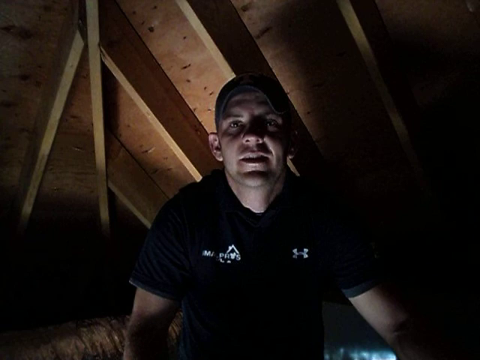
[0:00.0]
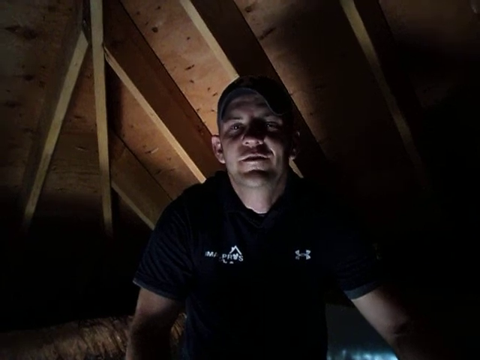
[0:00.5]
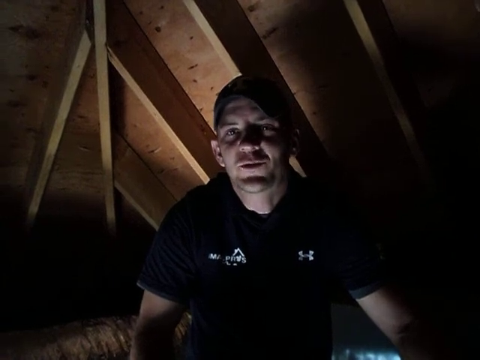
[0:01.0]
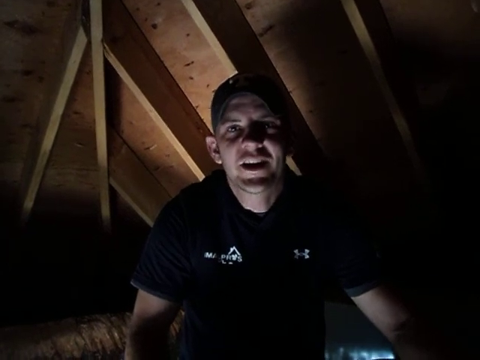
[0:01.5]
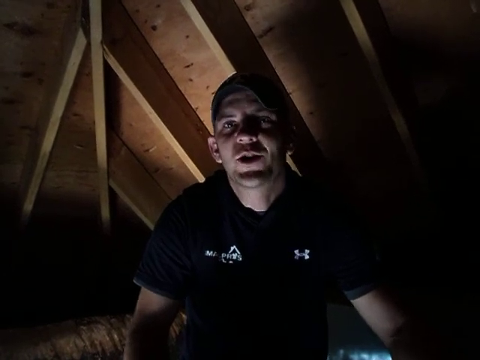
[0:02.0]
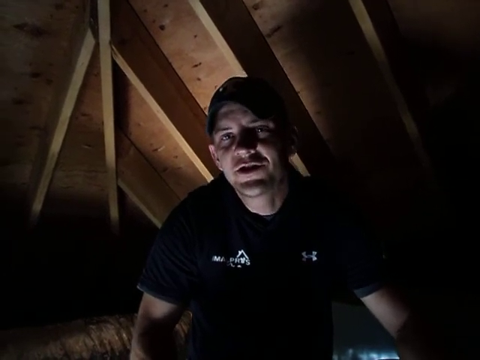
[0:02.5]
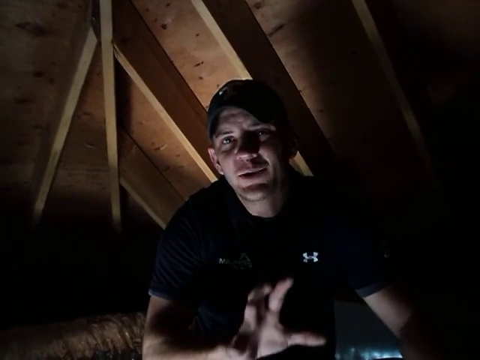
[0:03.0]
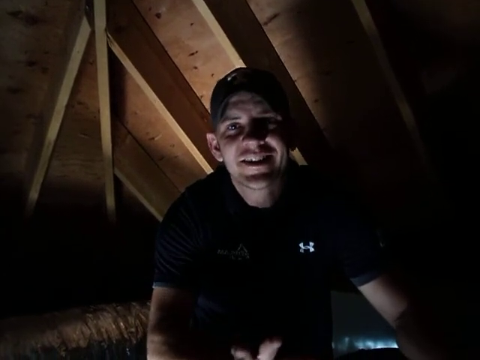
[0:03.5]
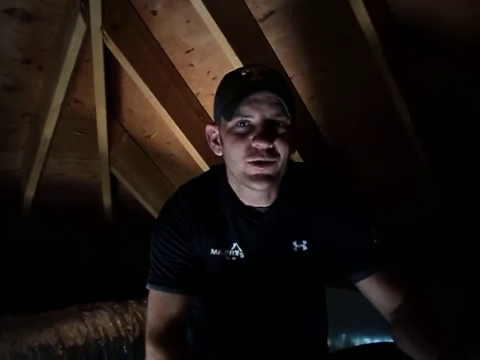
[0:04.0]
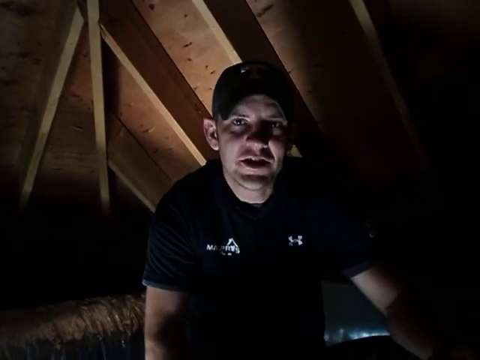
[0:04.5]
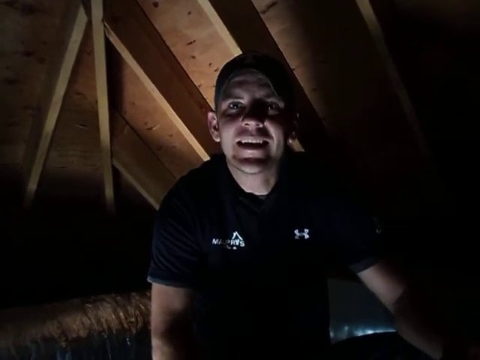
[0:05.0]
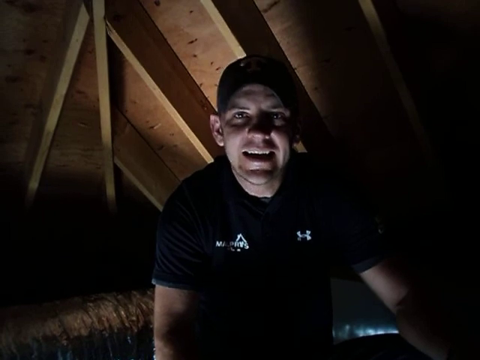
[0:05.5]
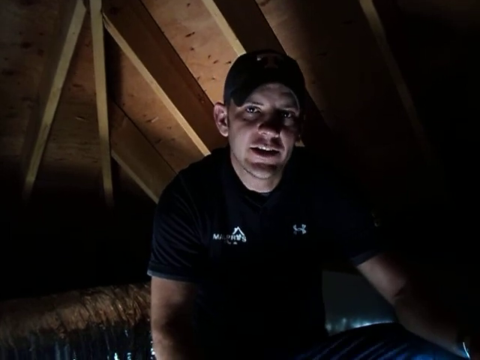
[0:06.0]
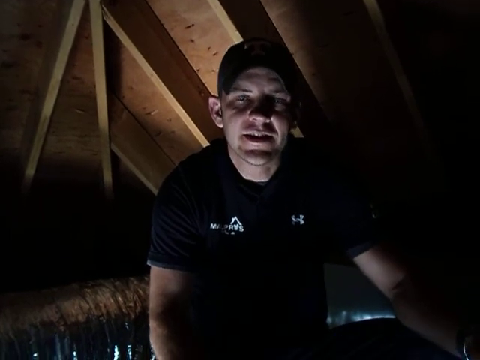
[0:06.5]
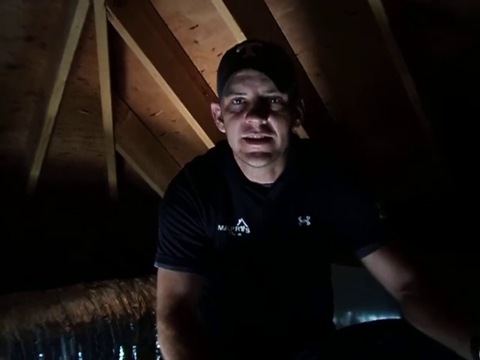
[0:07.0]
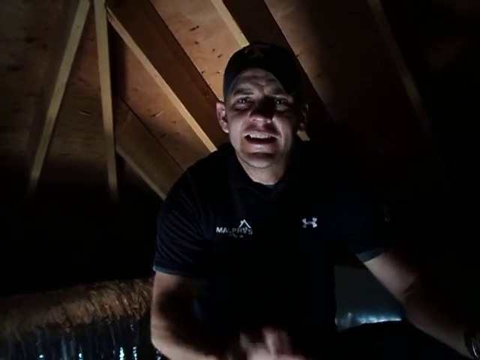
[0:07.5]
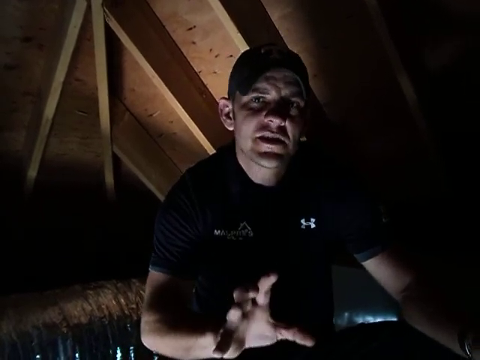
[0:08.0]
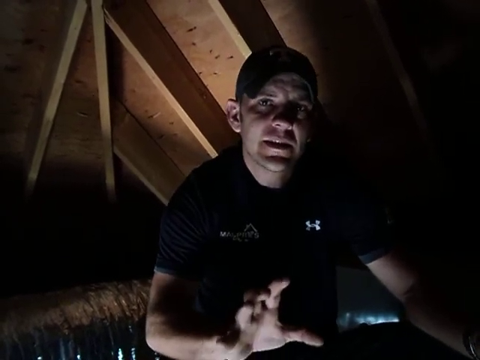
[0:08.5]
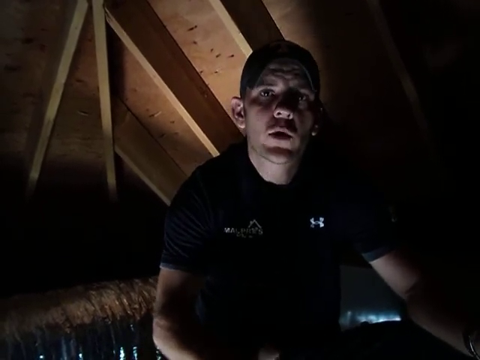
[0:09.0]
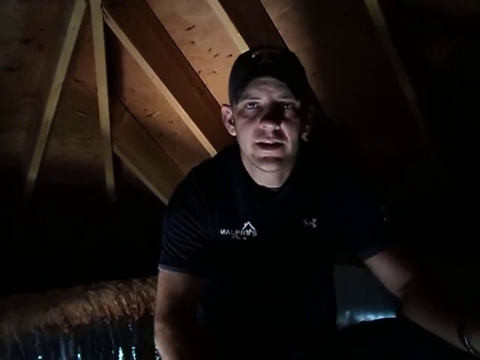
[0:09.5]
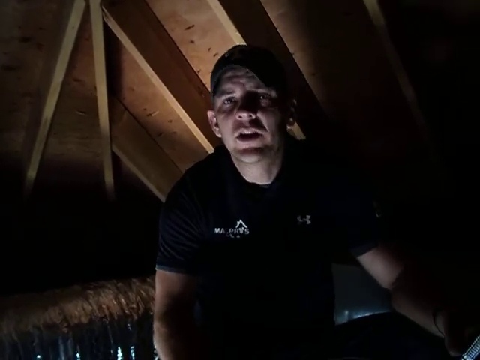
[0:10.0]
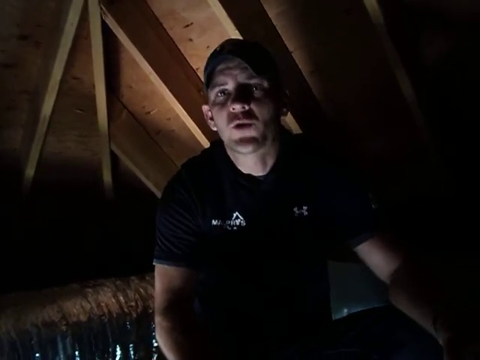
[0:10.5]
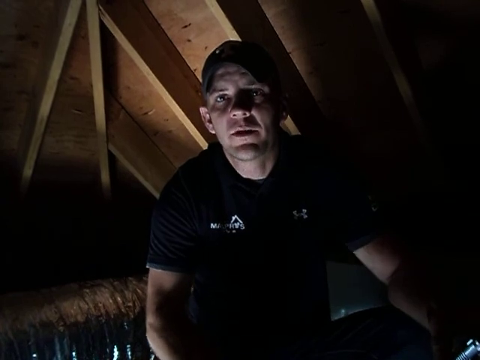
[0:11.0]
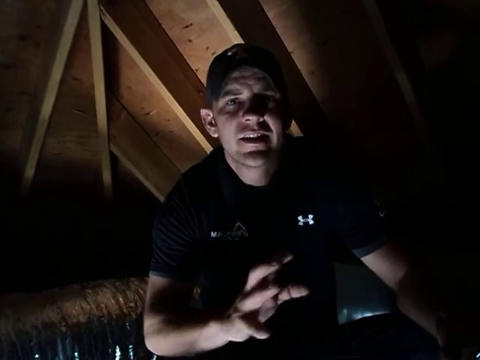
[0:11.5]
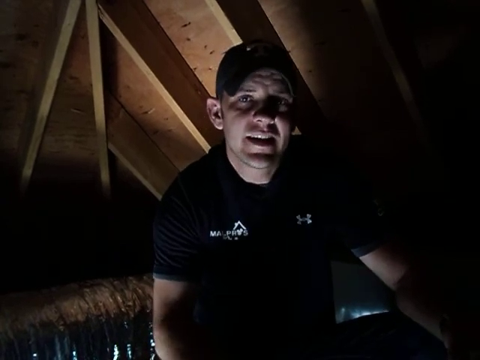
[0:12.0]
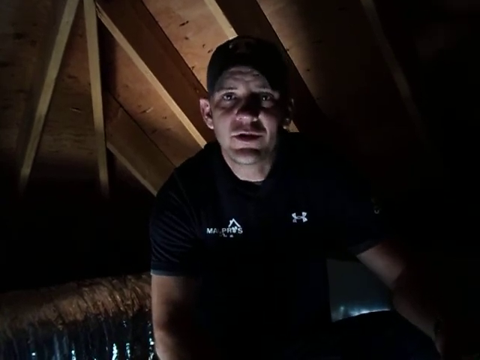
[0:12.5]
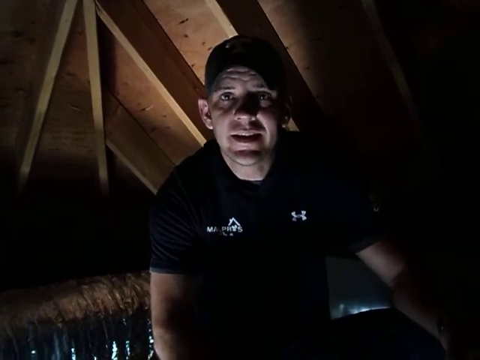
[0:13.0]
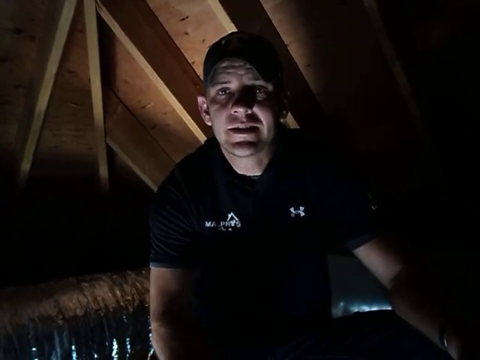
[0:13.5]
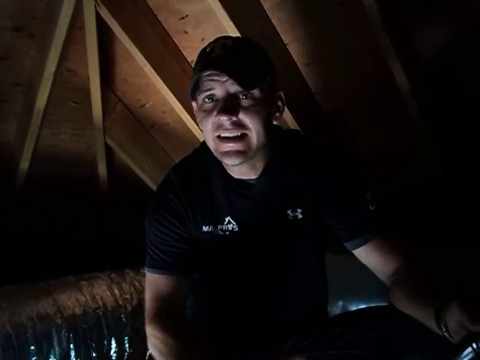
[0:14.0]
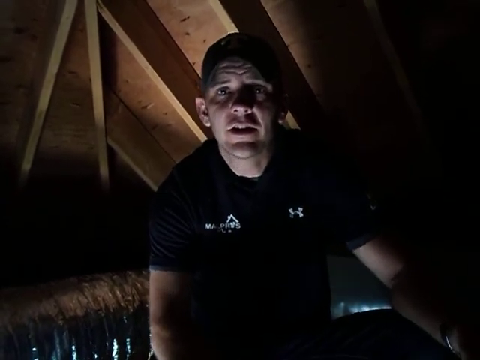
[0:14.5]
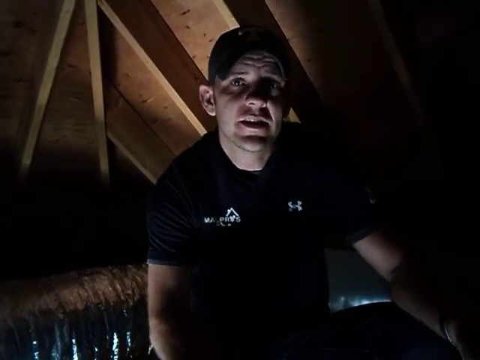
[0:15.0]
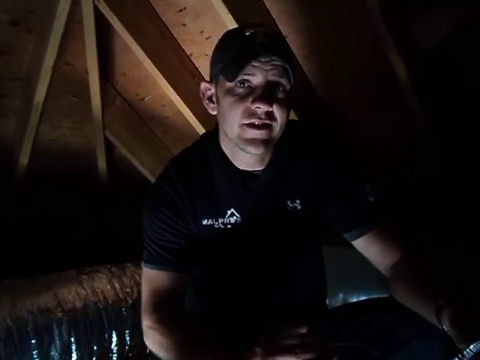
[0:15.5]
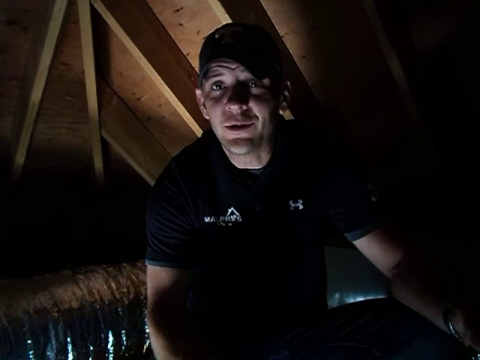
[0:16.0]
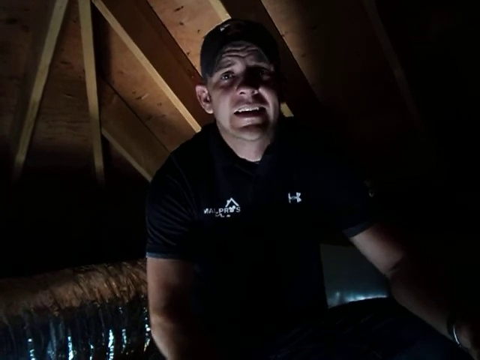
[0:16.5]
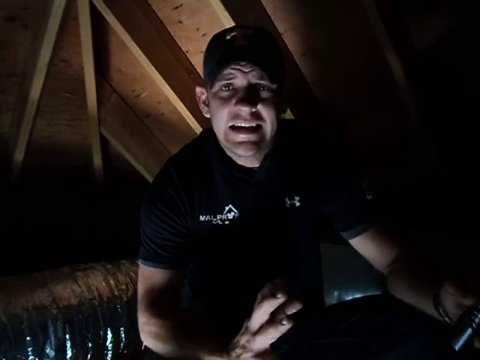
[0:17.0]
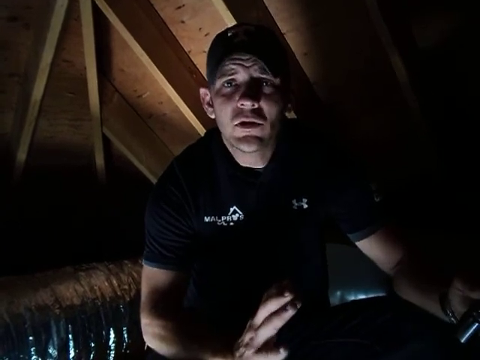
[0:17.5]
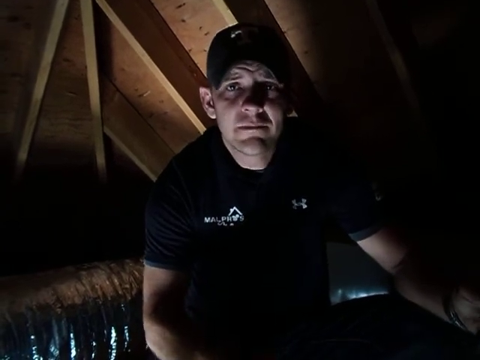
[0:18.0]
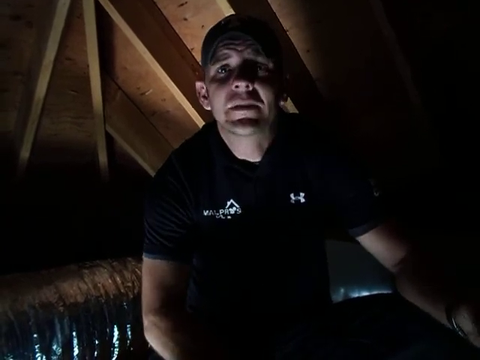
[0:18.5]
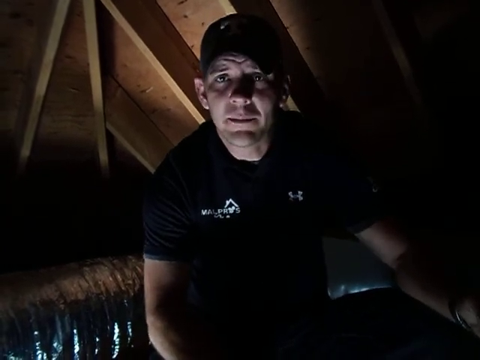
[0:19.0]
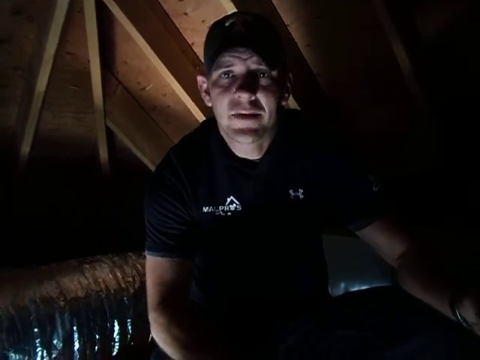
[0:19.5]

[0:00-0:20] The video appears to be filmed in an attic. A man wearing an Under Armour short-sleeved shirt and a ball cap talks into a camera. There is very little light in the attic, so it is very shadowy, and he is visible only from the torso up. The underlayment of the roof and the joist system on the attic ceiling are visible. As he talks he moves his head around, turning it somewhat left and right a lot, and he lifts his right hand up, puts it down, and lifts it up again. He appears to be squatting, though it is hard to say whether he is standing. His left hand is off screen, only a little of it visible. Although it is shadowy under the ball cap, wrinkles show on his forehead when he raises his eyebrows.